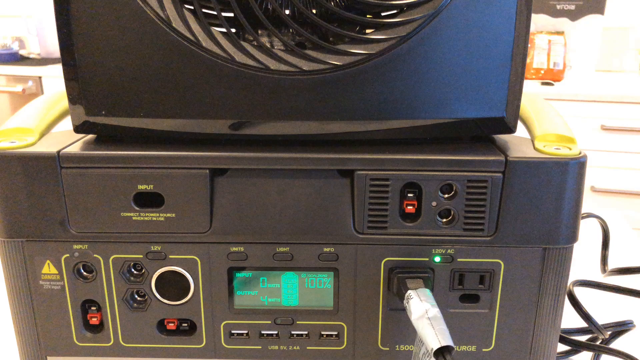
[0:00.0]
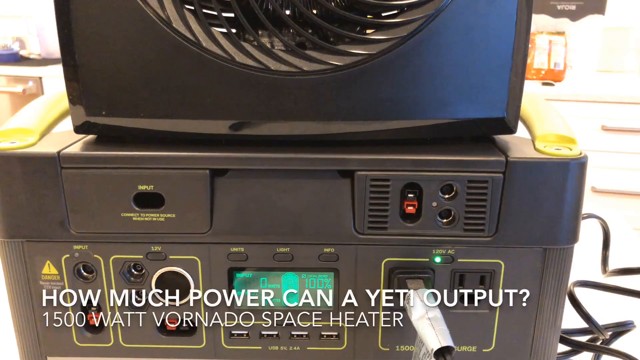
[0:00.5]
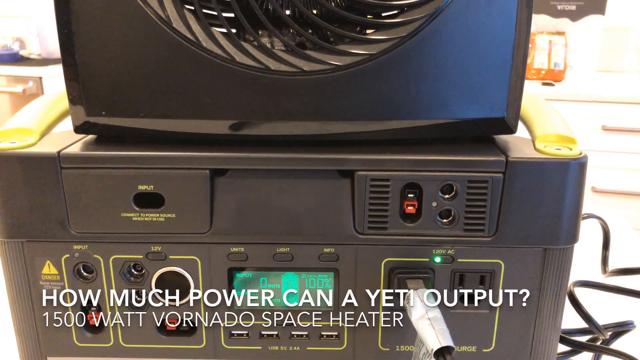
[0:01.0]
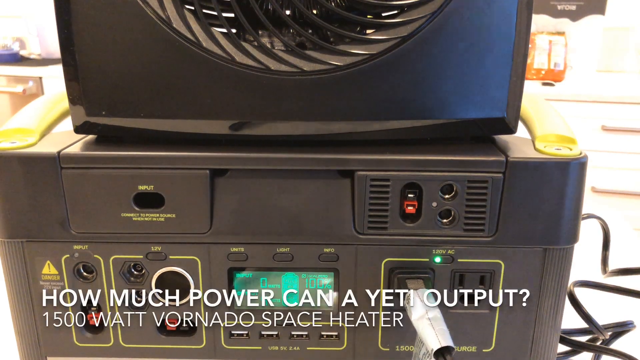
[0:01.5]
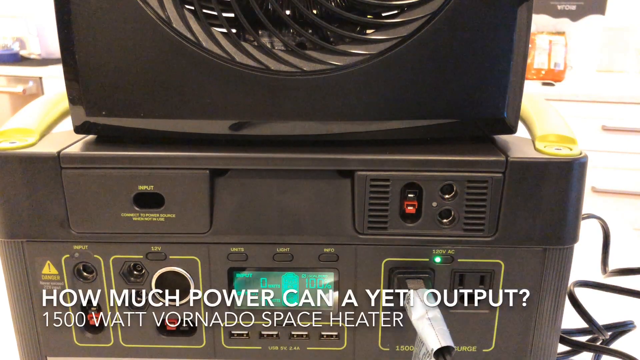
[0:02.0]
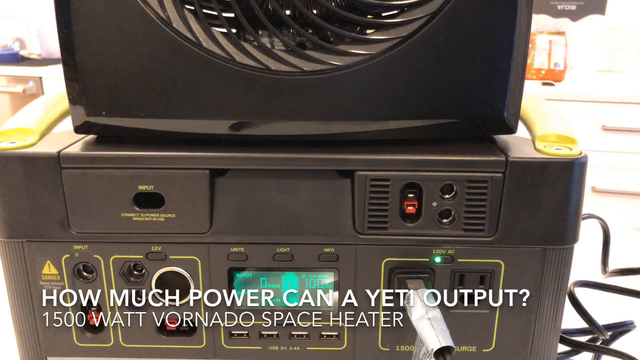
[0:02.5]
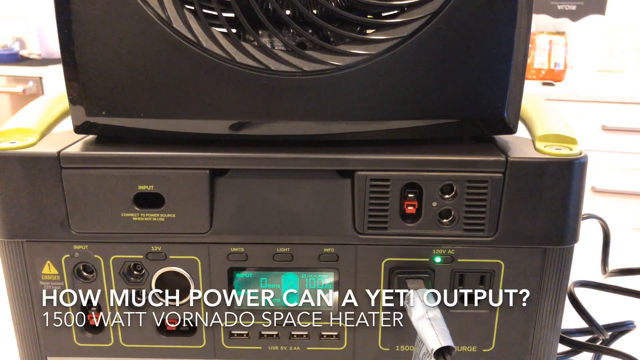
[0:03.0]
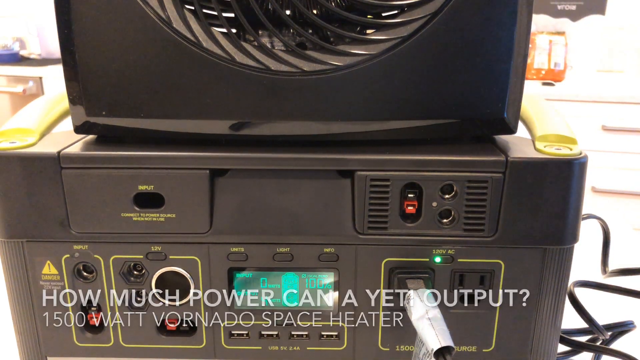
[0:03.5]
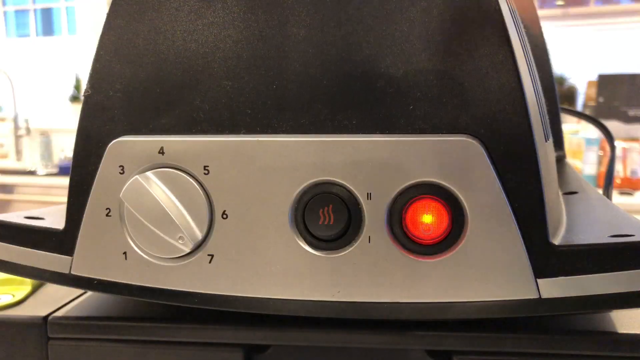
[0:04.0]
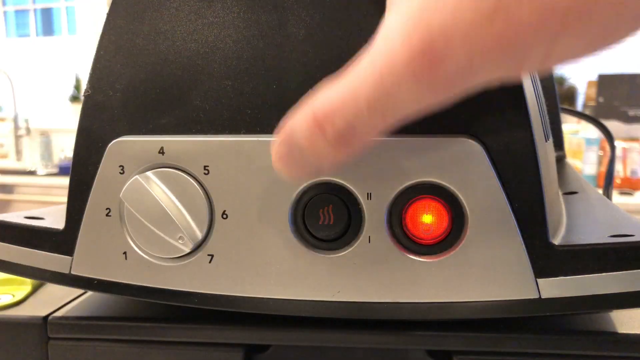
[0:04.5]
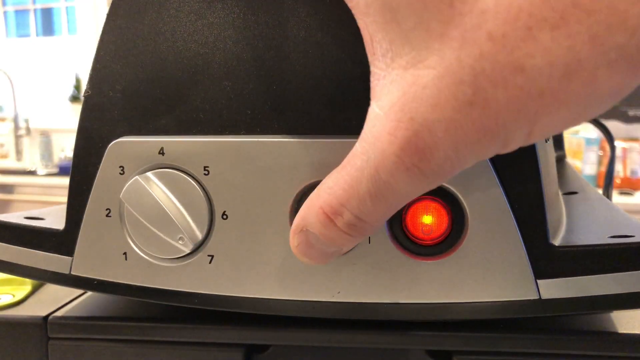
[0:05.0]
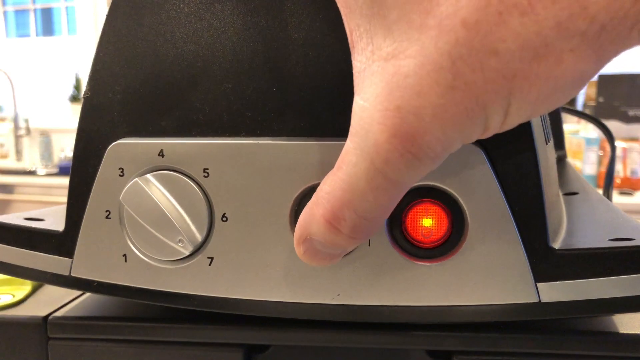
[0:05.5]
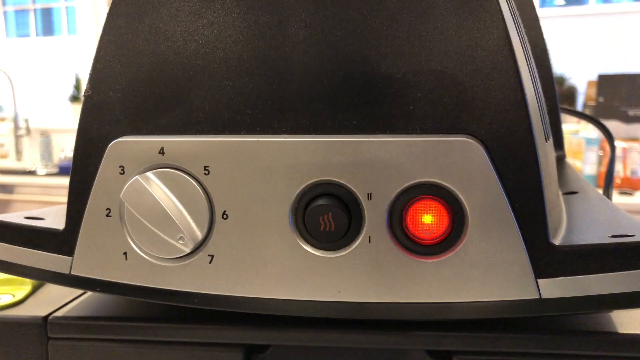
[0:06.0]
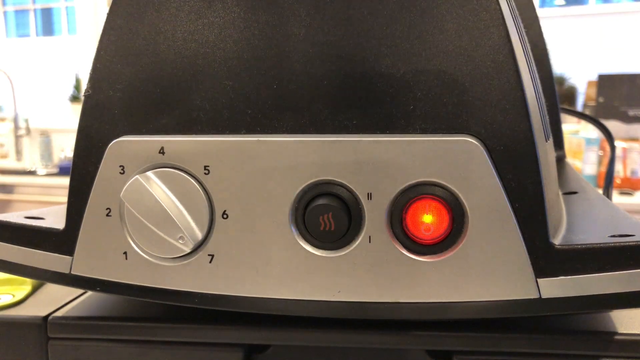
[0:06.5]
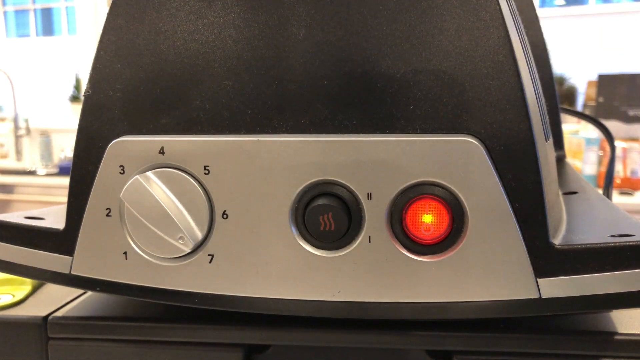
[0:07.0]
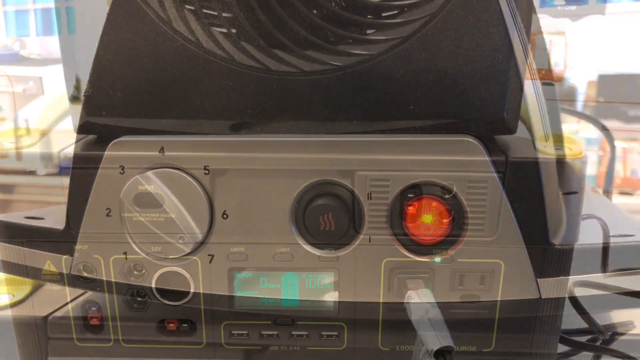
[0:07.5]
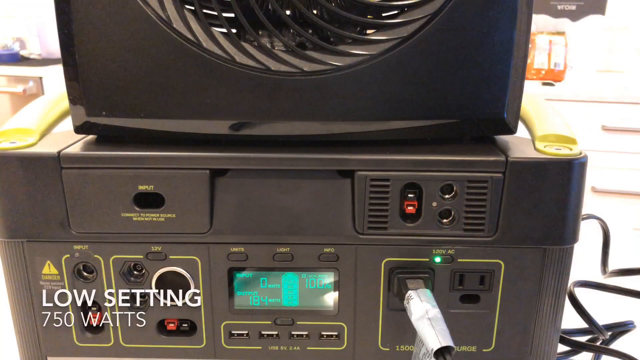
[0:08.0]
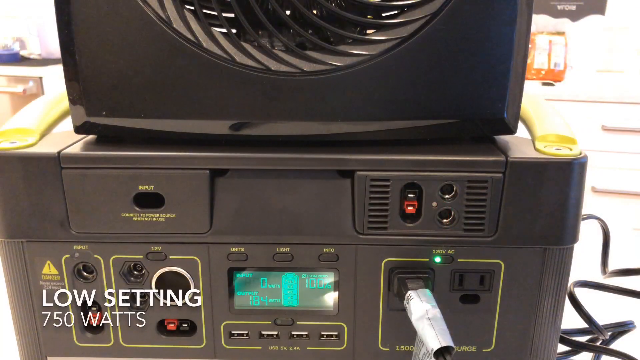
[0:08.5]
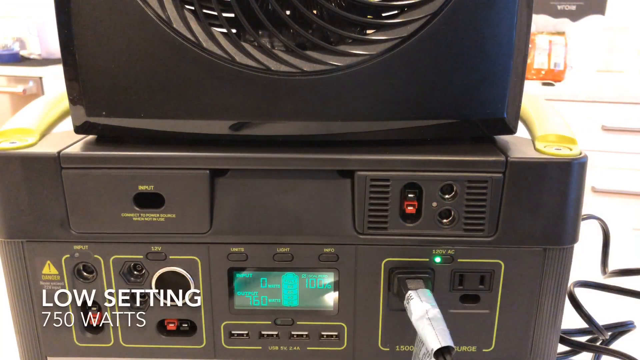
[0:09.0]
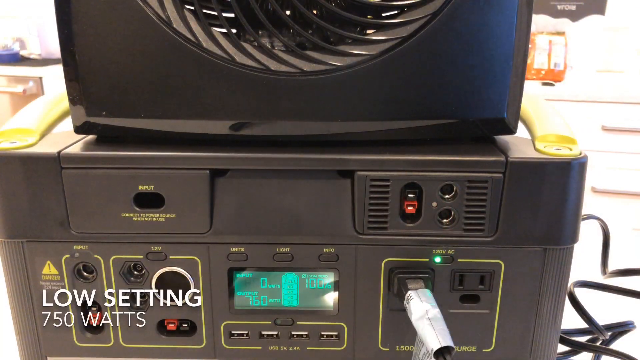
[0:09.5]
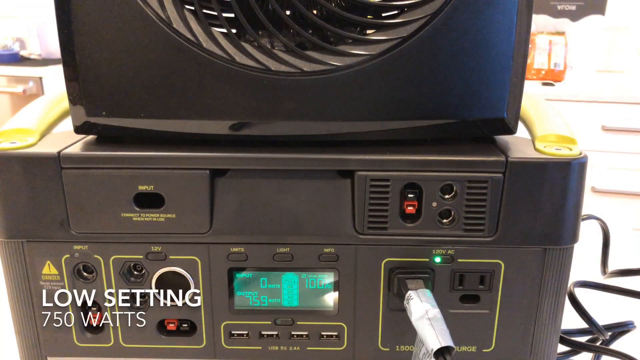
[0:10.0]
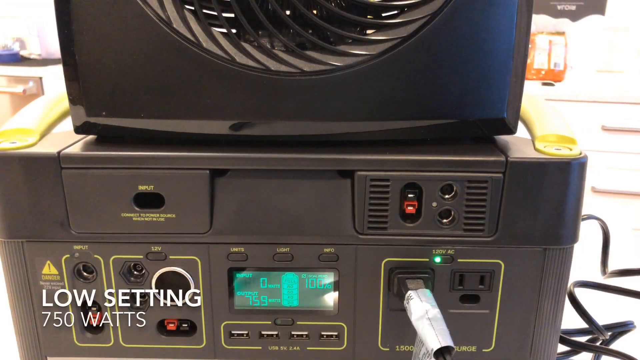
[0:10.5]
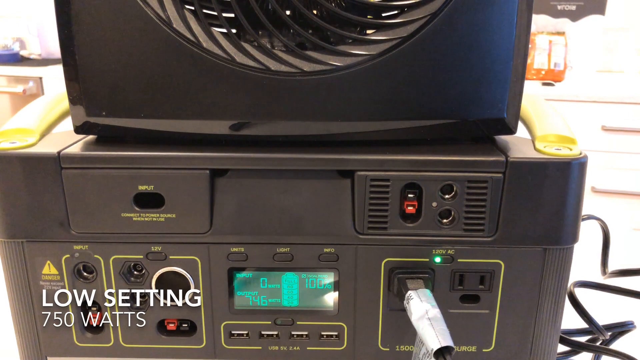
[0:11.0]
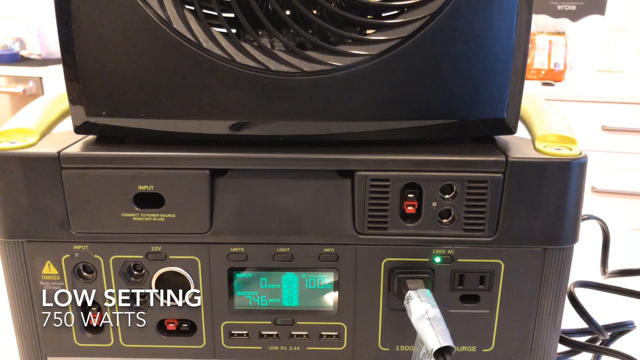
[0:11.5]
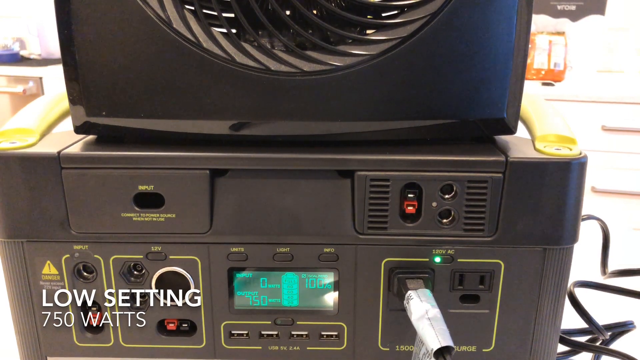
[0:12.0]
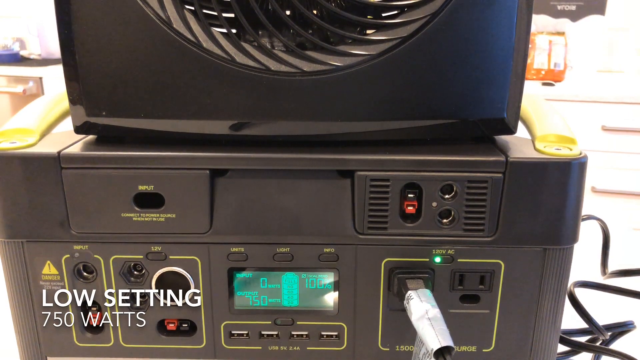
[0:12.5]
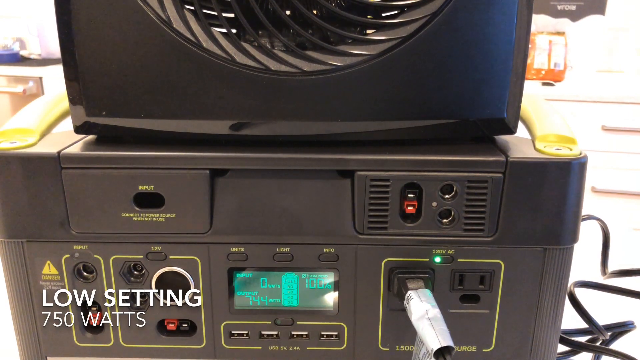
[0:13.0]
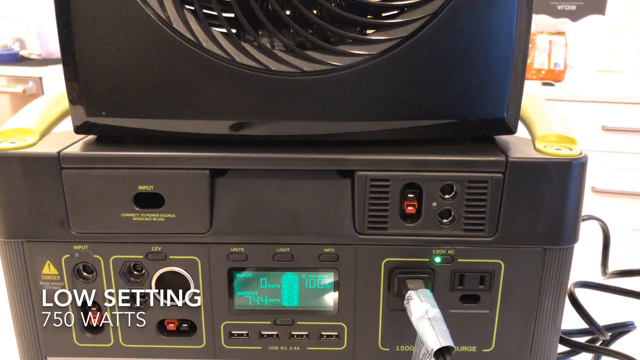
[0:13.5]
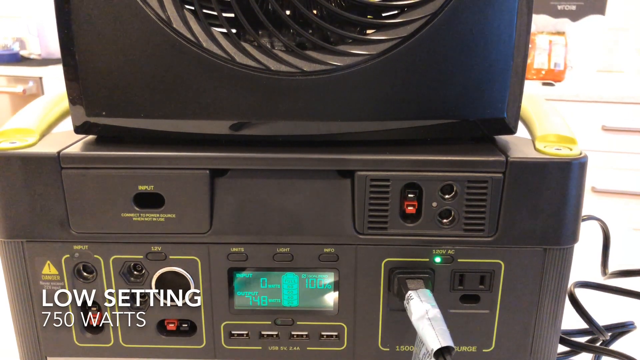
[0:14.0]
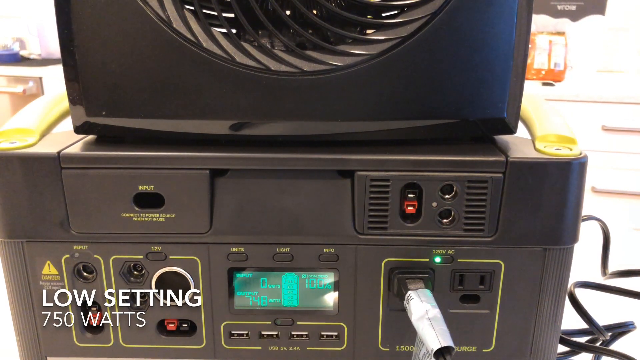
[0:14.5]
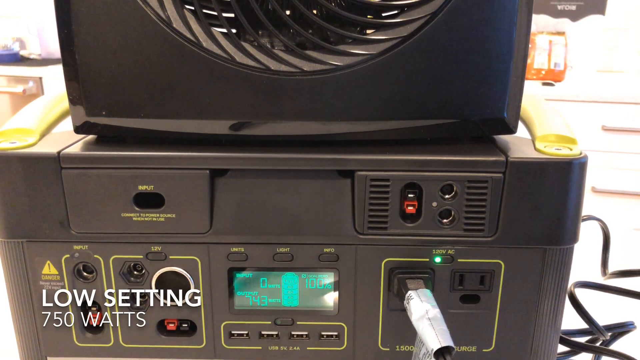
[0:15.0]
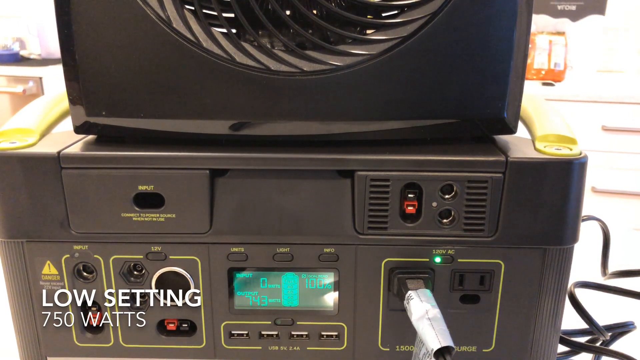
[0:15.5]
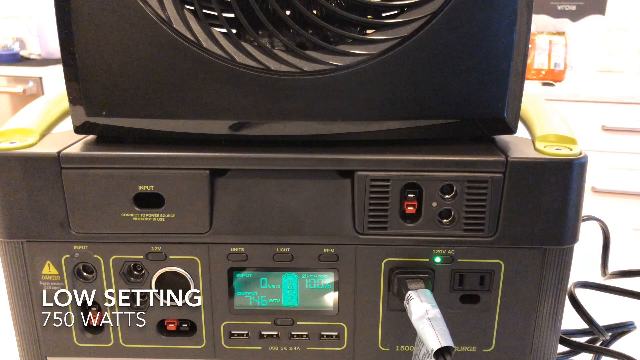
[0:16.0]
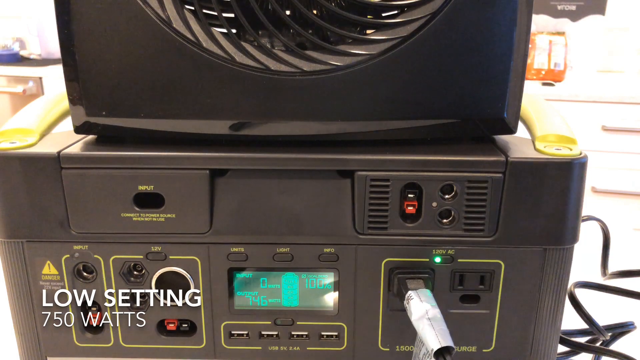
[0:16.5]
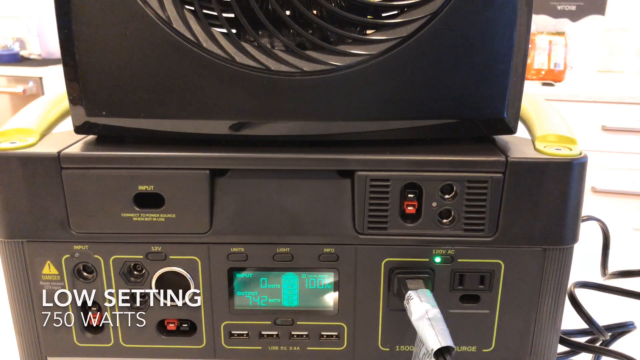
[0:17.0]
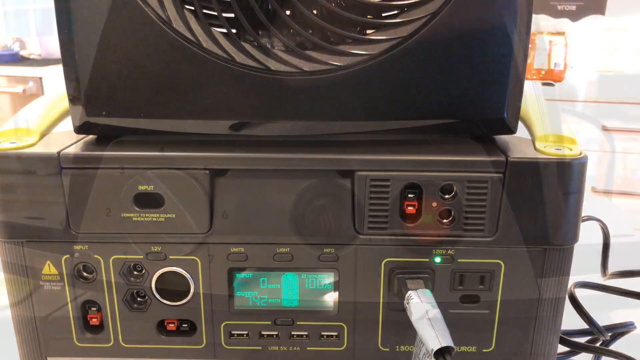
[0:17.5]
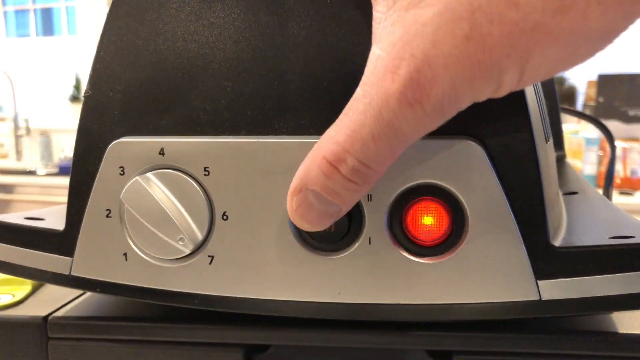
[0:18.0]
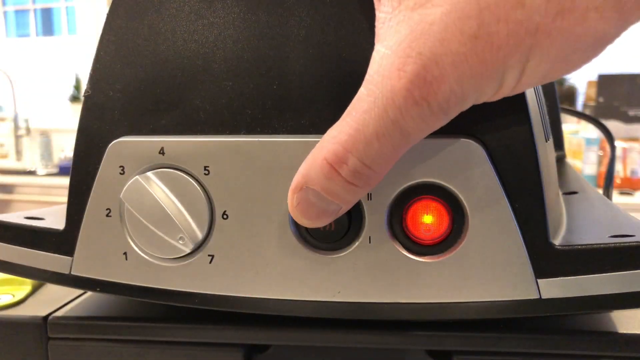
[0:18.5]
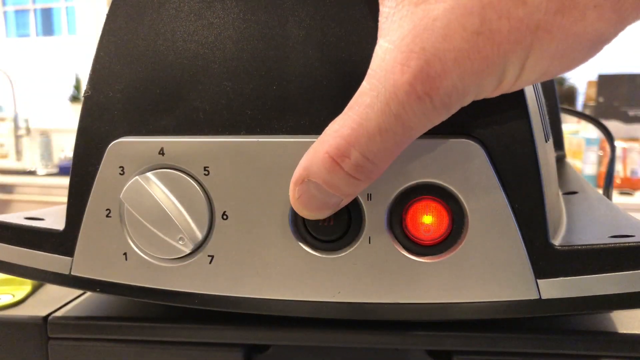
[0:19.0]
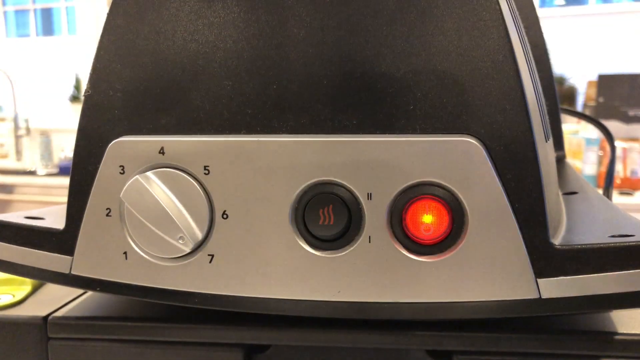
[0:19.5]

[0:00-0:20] A receiver is stacked on another piece of electrical equipment, with a fan placed on top of the receiver; the fan is barely visible, but the receiver is clear. Text on the video reads "how much power can a Yeti output". The situation is probably an experiment. Text reads "low setting", which is 750 watts. A screen measuring output displays its information in green. Someone's right hand reaches down and the thumb pushes what looks like the on button of a Verano space heater. Something is plugged into an outlet on the receiver. The heater is turned to number seven, a setting on the heater itself.